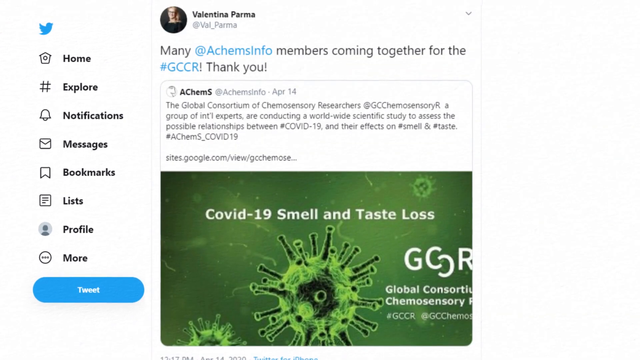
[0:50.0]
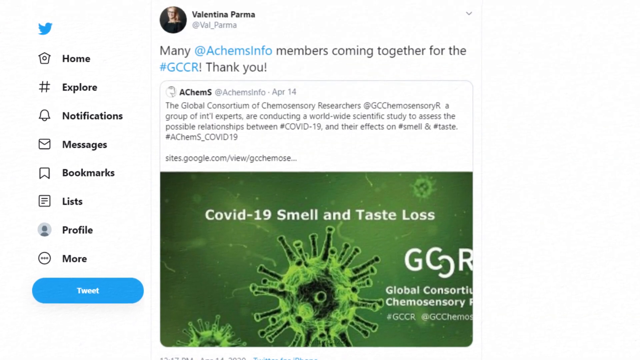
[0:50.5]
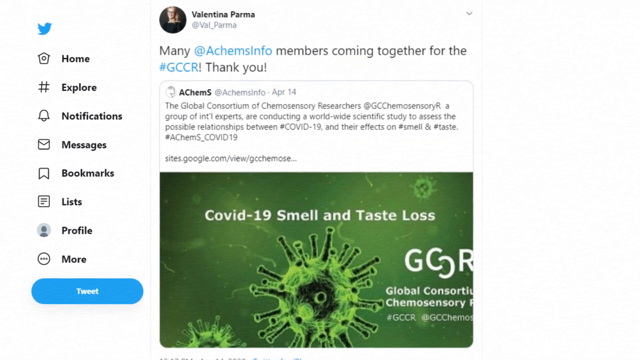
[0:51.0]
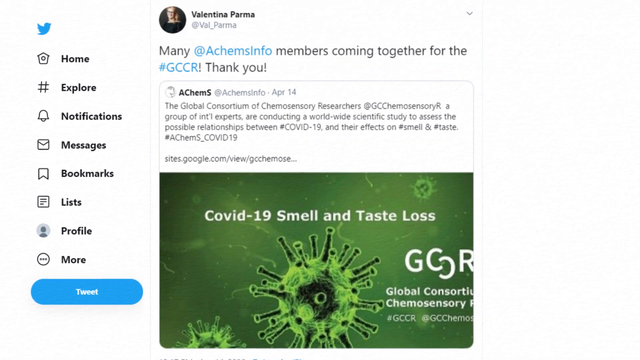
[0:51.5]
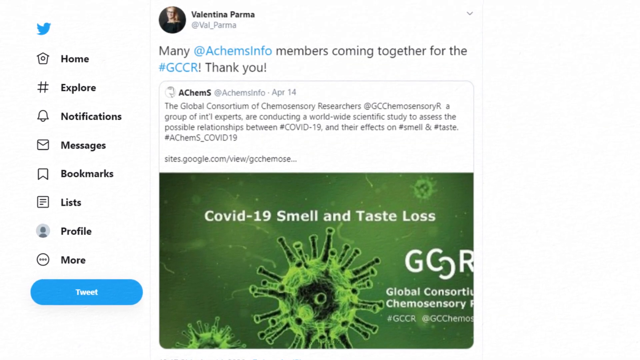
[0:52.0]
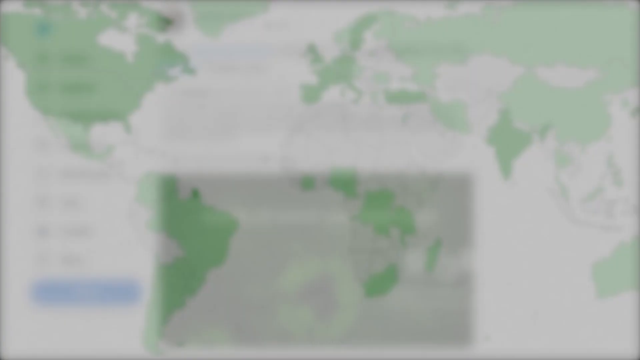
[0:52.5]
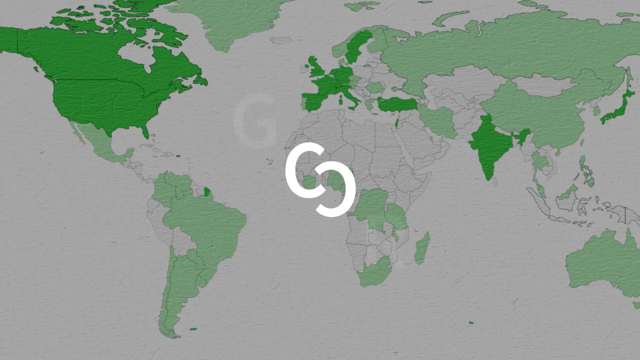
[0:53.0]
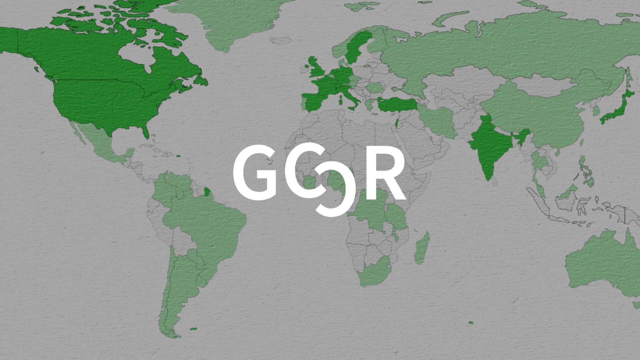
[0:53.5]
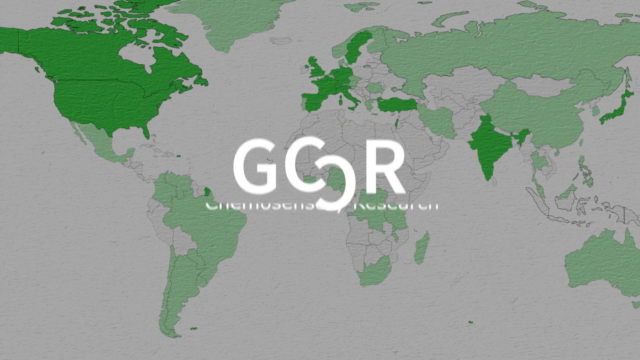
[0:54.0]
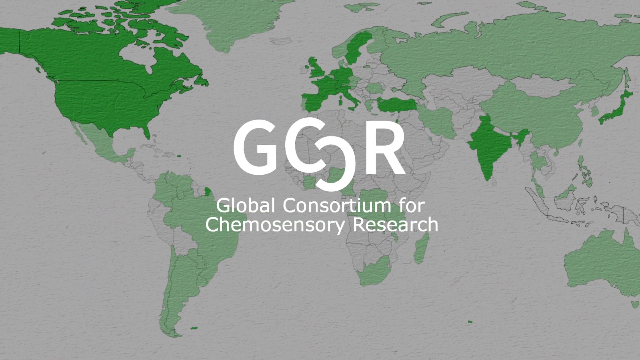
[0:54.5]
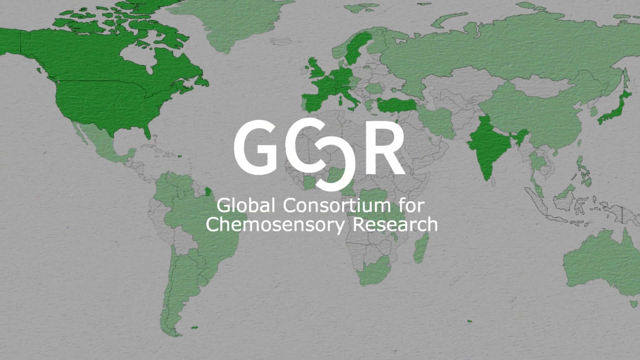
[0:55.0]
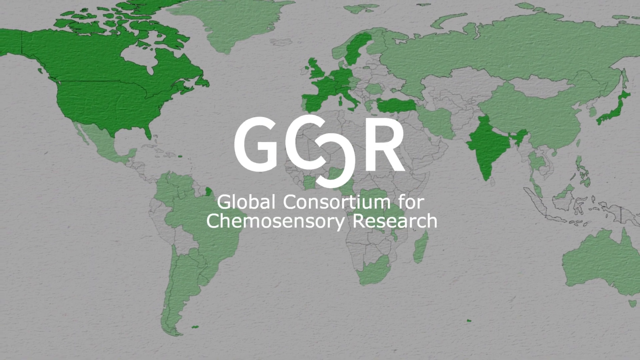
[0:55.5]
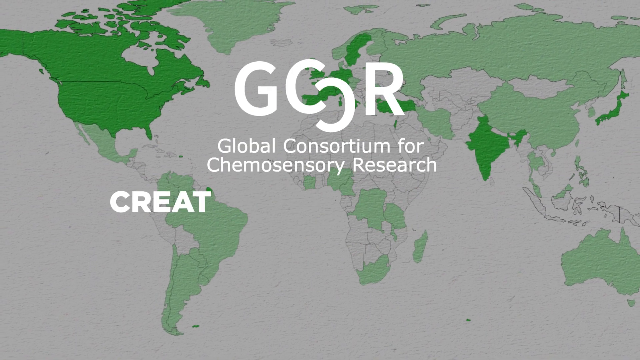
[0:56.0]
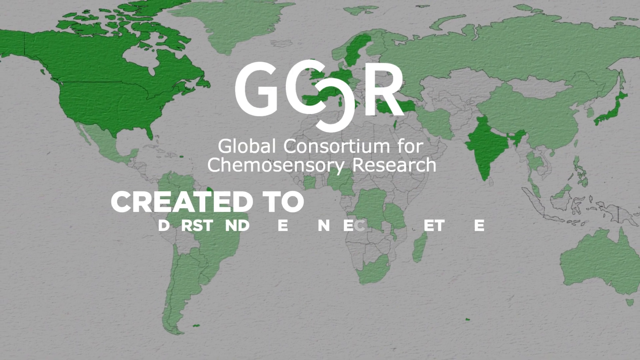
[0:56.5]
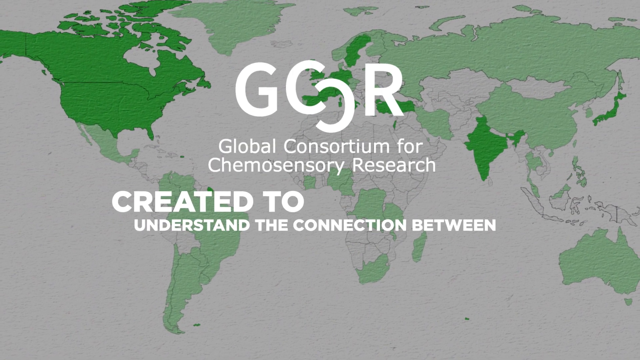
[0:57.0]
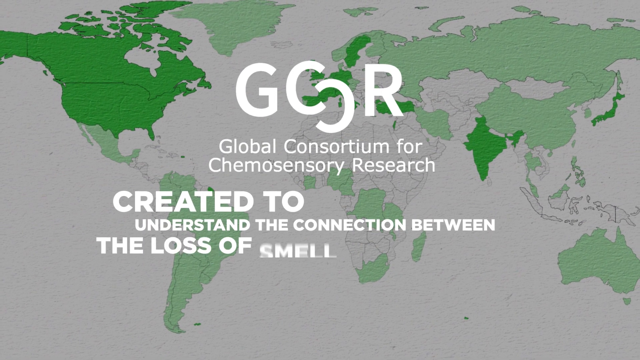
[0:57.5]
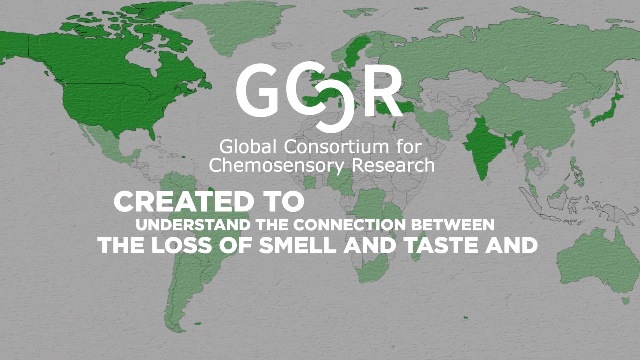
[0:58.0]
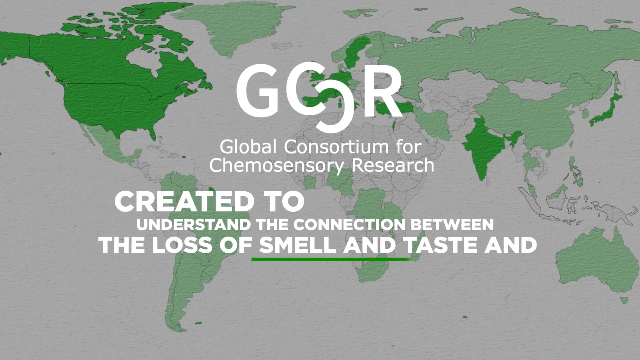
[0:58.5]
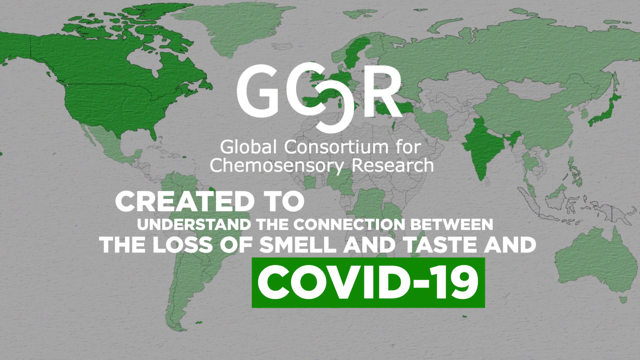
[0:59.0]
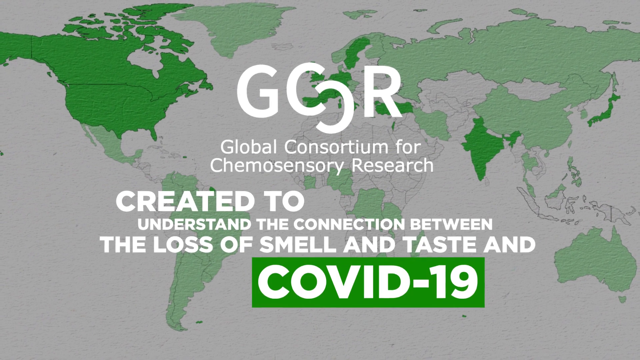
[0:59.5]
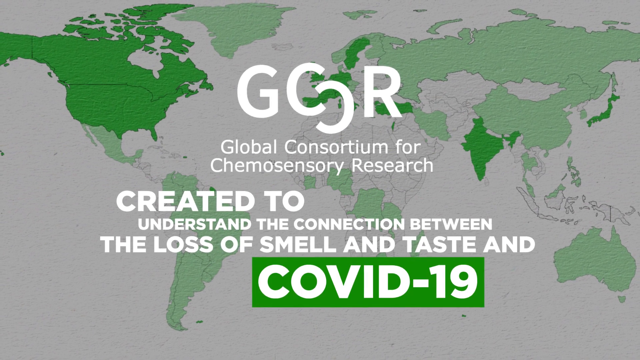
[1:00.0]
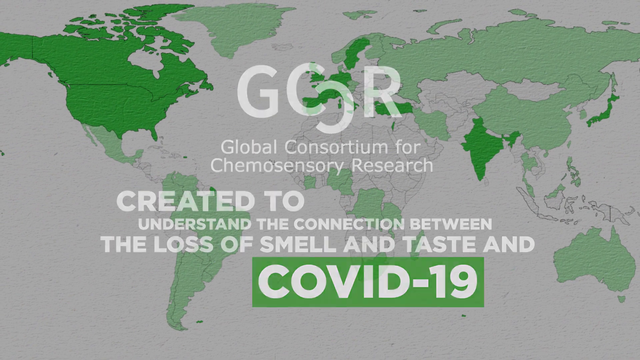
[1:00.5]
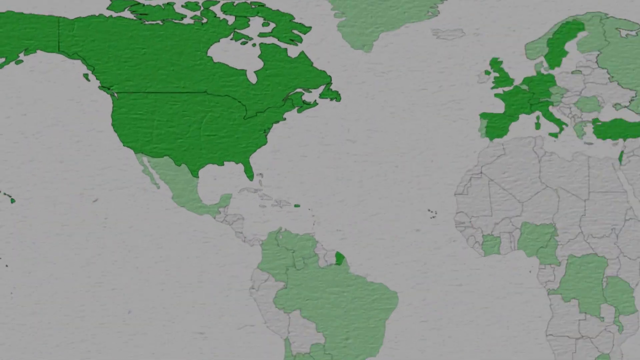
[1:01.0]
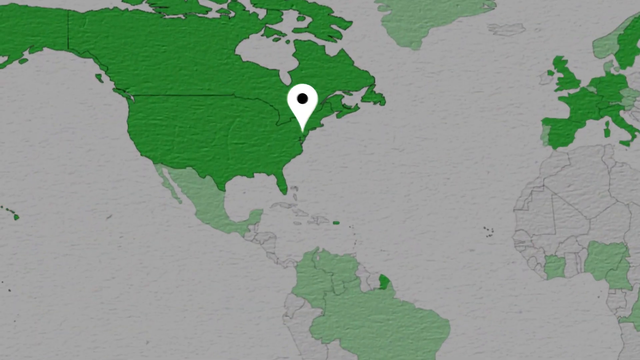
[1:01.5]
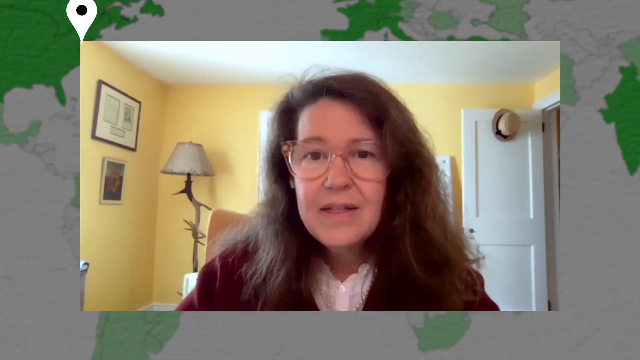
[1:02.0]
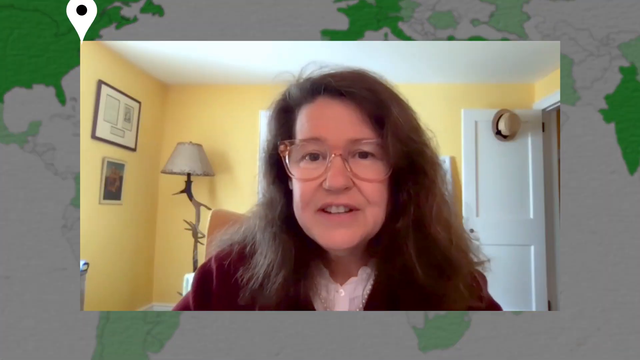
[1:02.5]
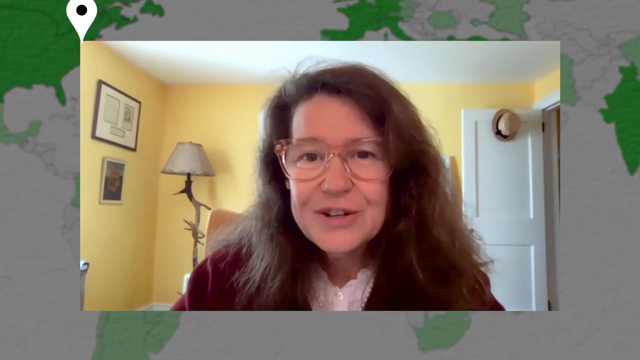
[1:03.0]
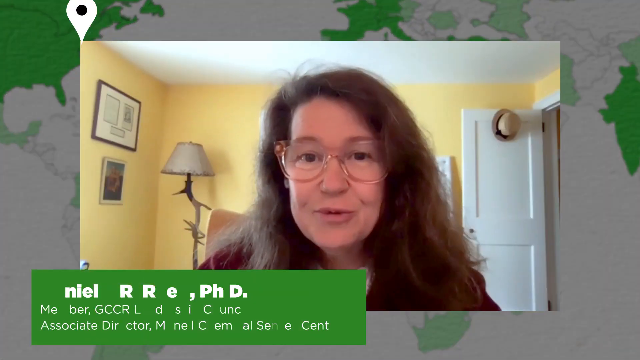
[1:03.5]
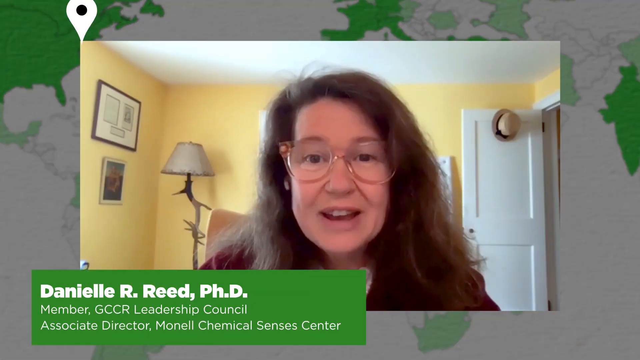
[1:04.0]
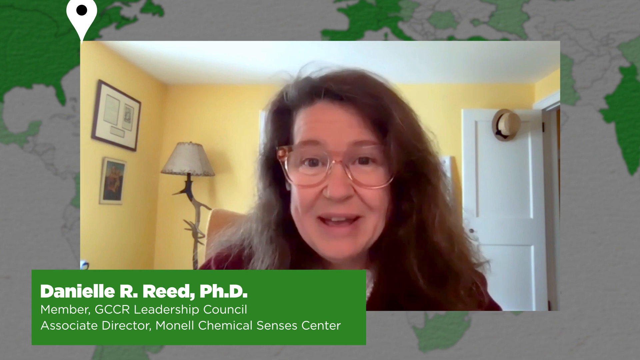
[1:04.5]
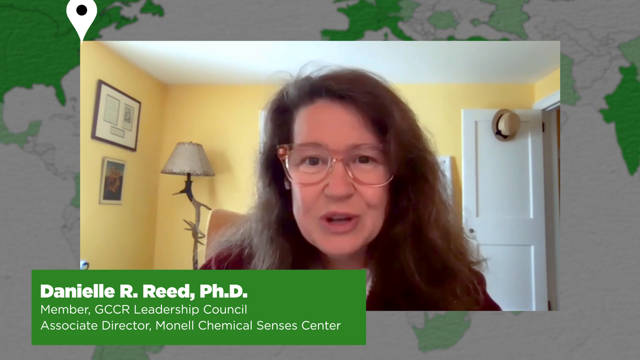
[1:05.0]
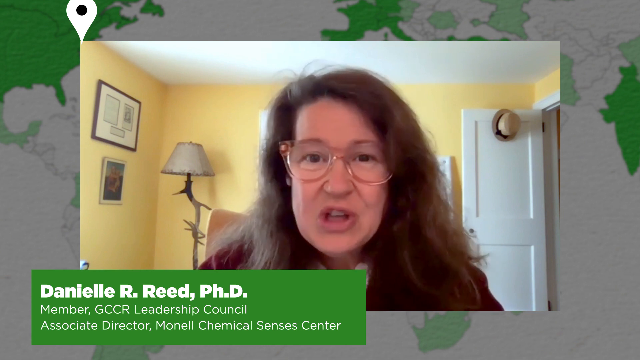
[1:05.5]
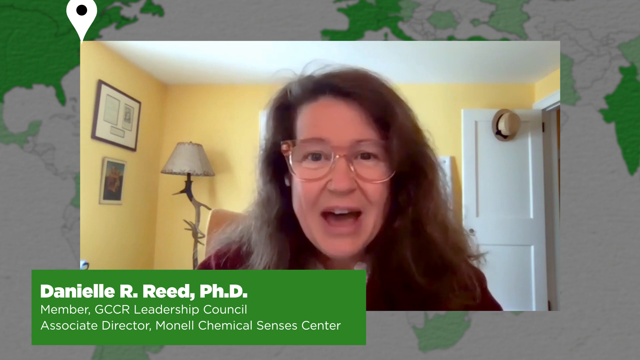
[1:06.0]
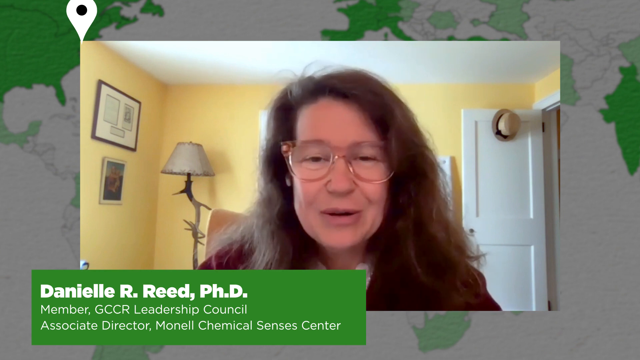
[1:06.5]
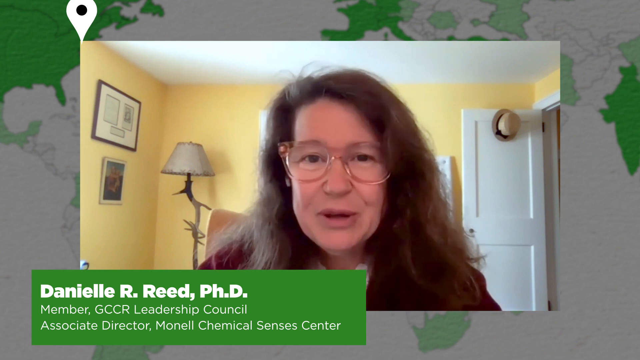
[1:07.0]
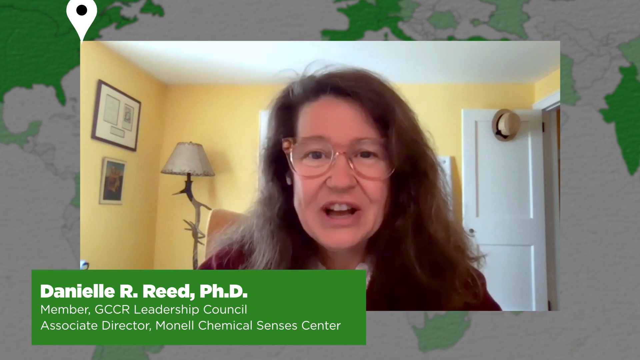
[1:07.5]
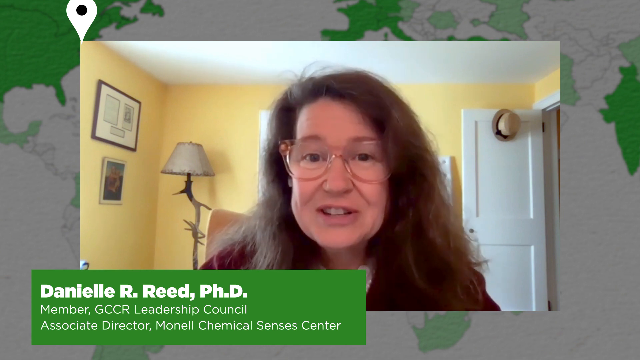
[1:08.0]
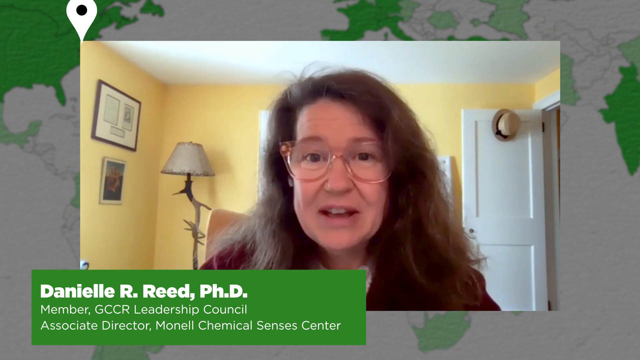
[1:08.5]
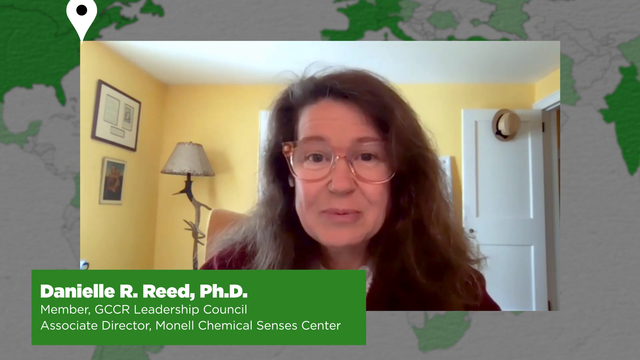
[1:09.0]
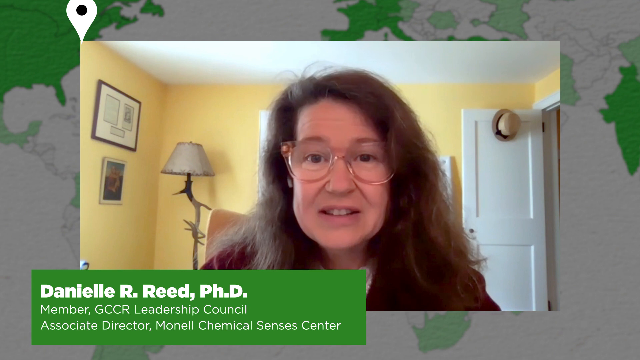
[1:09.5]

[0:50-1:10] A white page shows a Twitter feed with a small circle containing a woman's picture; to its right is the name Valentina Parma, and beneath it a post ending "members coming together for the GCCR, thank you." The video cuts to a gray and green map in which the countries are green: the United States is dark green, all other countries except a couple are light green, and the water is gray. Across the middle of the screen it reads "GCCR Global Consortium for Chemosensory Research. Created to understand the connection between the loss of smell and taste and COVID-19." A video then appears over the map showing a woman with long brown hair and glasses, wearing a maroon robe over a white shirt, in a yellow room with a white ceiling. Over her left shoulder behind her are a white door and a doorway, and over her right shoulder is a lamp. She speaks directly to the camera, and beneath her picture in the right corner the text reads "Danielle R. Reed PhD member GCCR leadership council associate director Monel Chemical Senses Center."